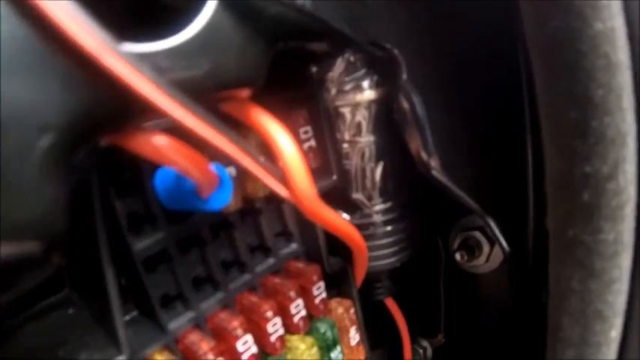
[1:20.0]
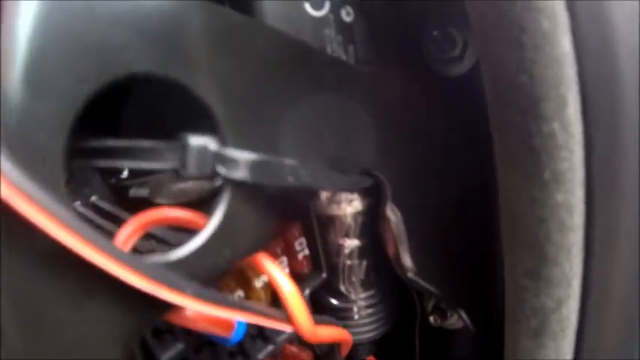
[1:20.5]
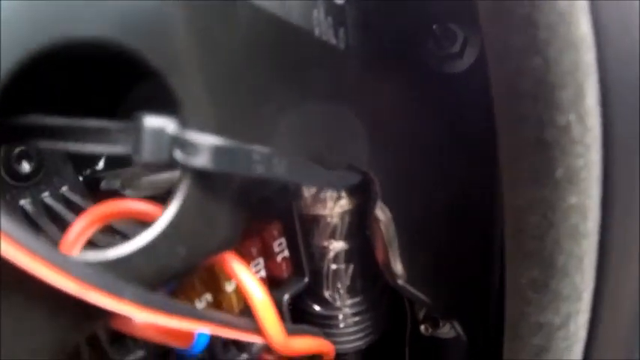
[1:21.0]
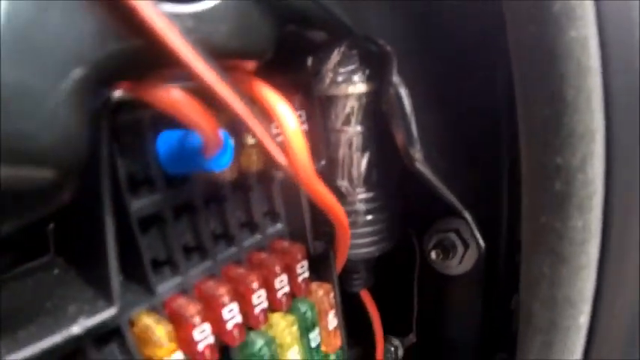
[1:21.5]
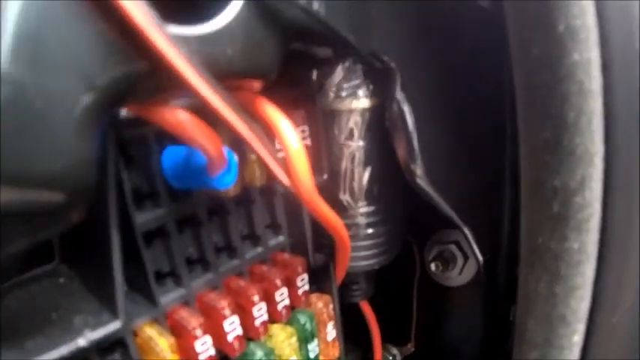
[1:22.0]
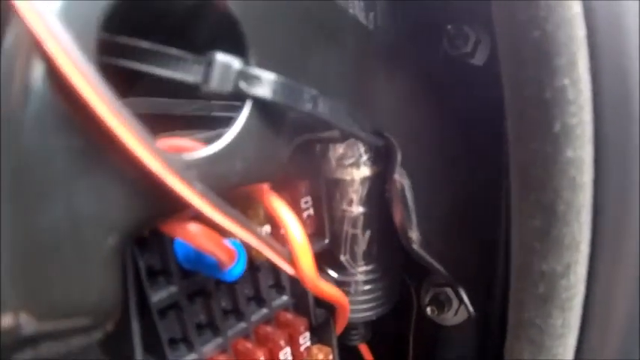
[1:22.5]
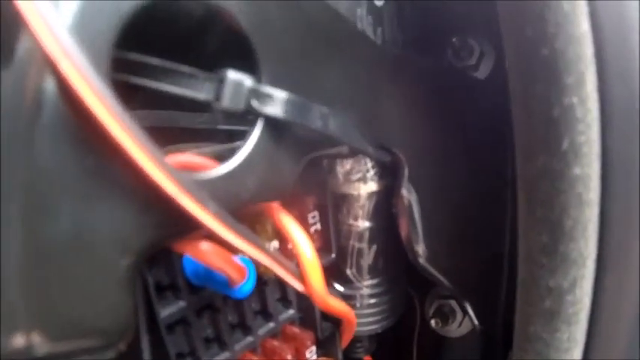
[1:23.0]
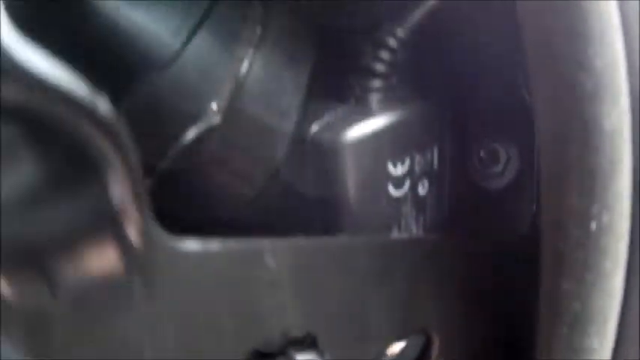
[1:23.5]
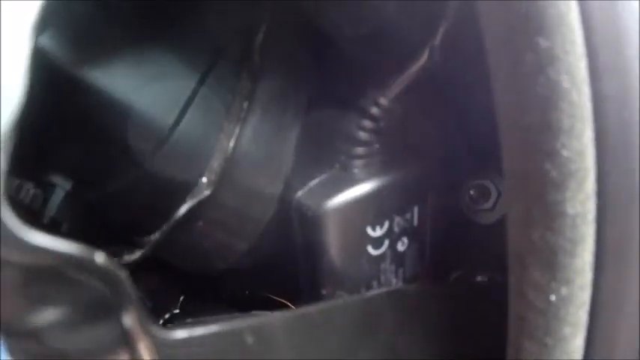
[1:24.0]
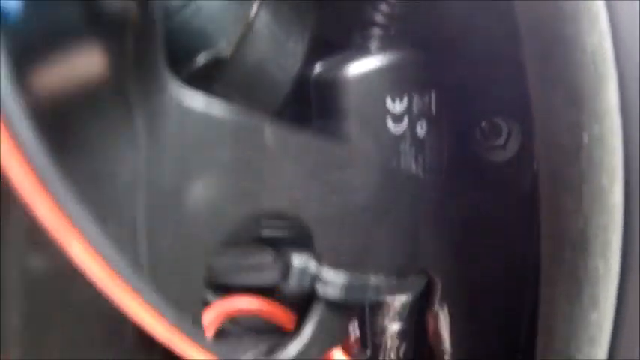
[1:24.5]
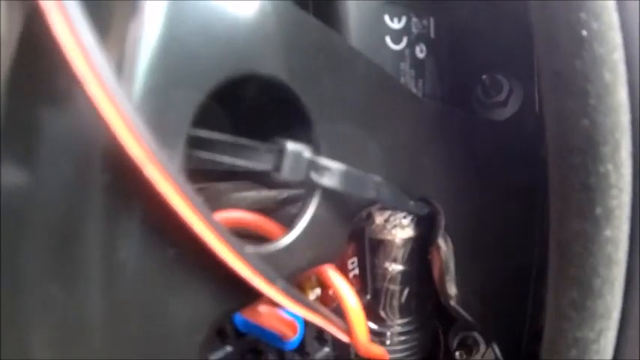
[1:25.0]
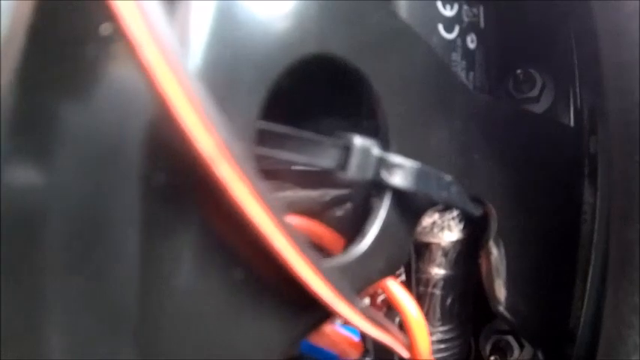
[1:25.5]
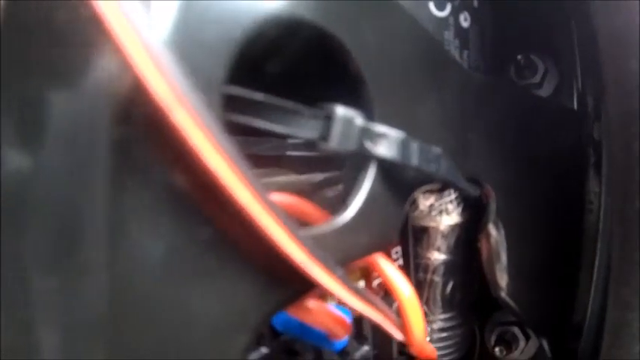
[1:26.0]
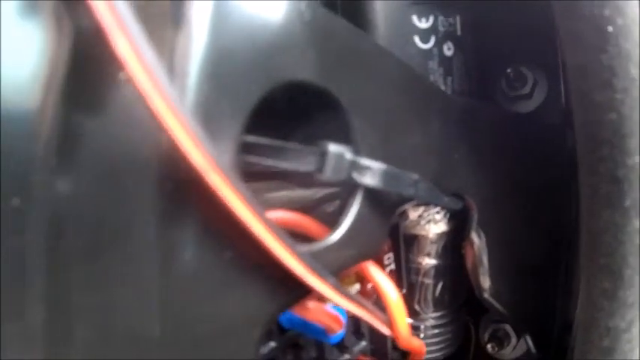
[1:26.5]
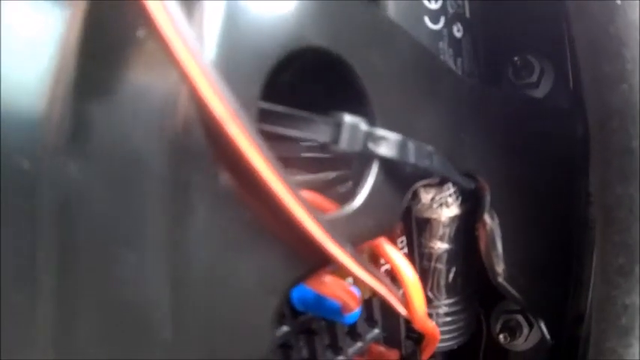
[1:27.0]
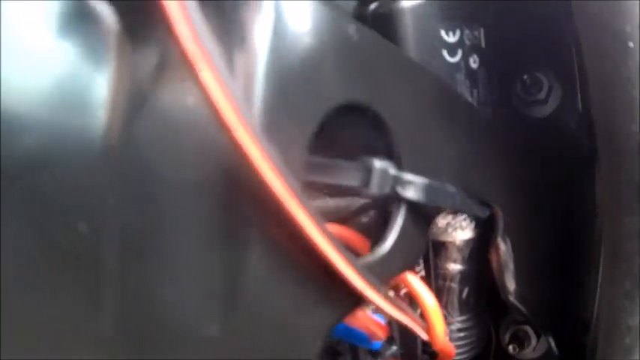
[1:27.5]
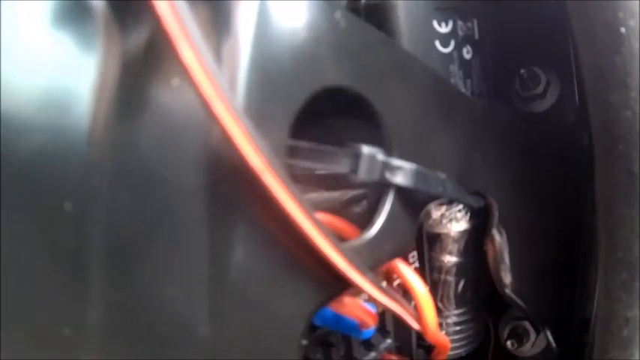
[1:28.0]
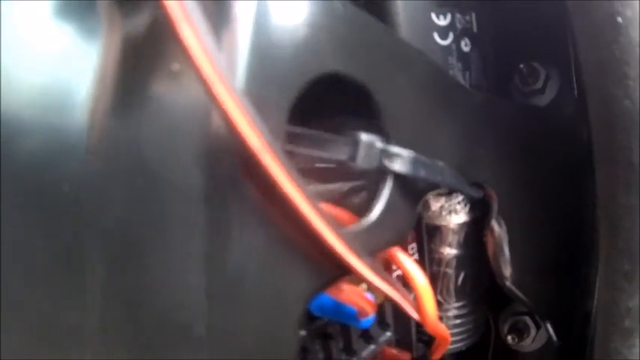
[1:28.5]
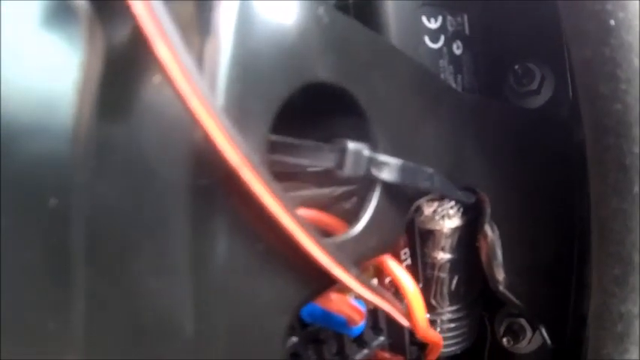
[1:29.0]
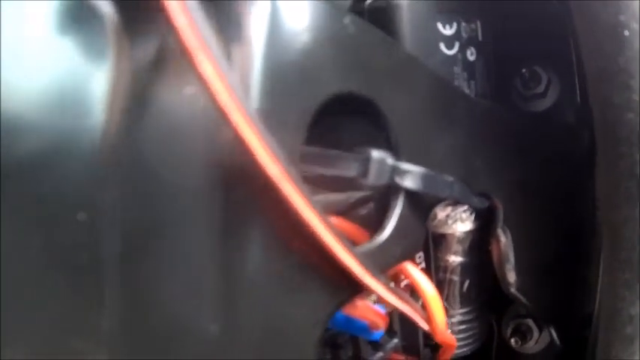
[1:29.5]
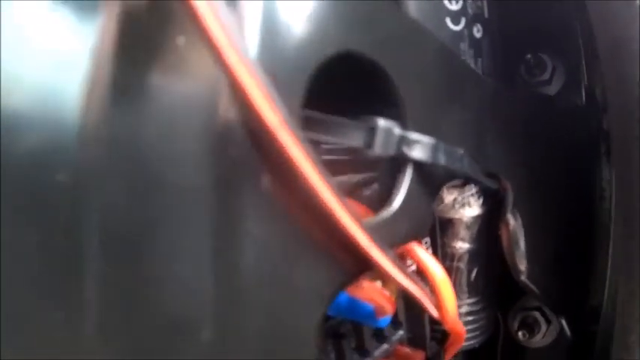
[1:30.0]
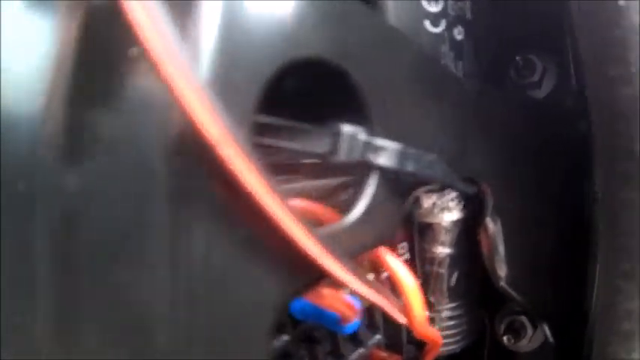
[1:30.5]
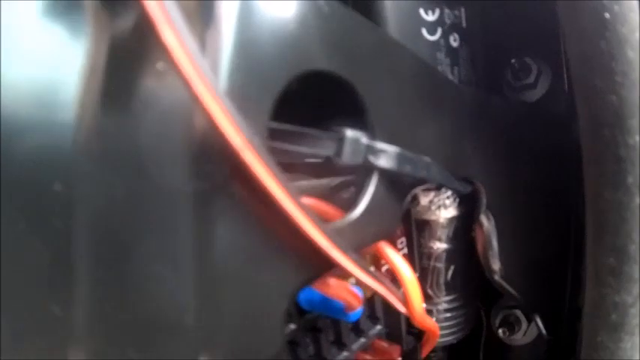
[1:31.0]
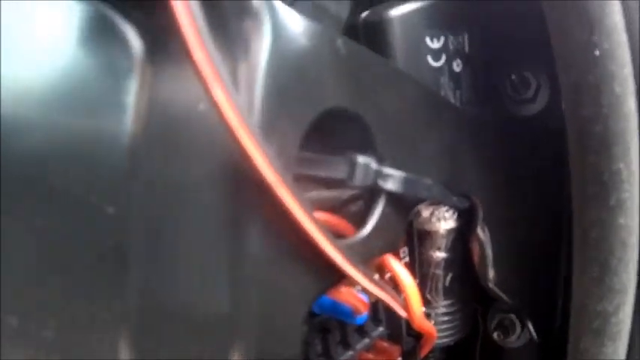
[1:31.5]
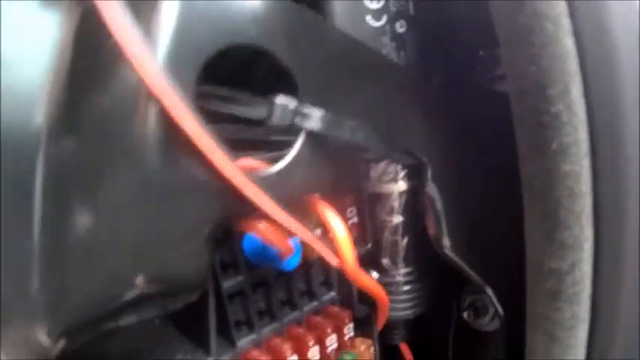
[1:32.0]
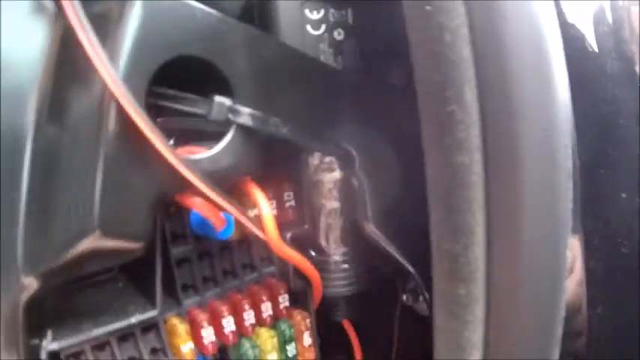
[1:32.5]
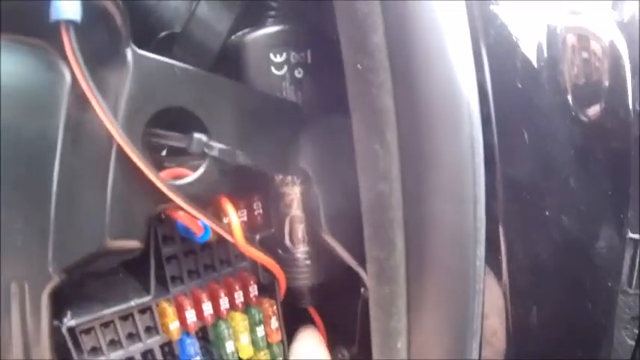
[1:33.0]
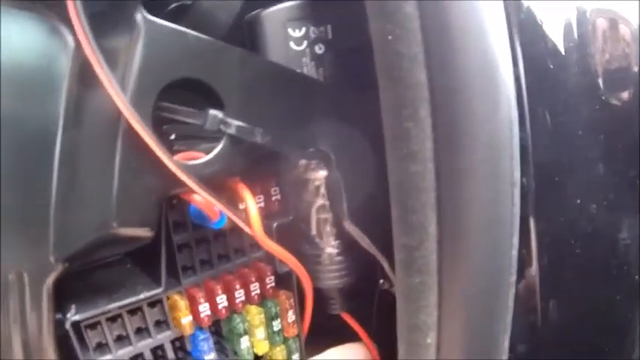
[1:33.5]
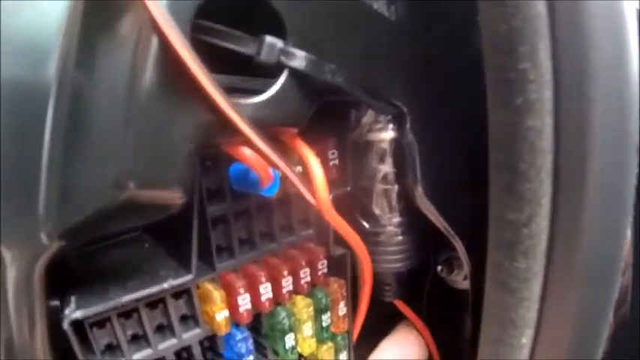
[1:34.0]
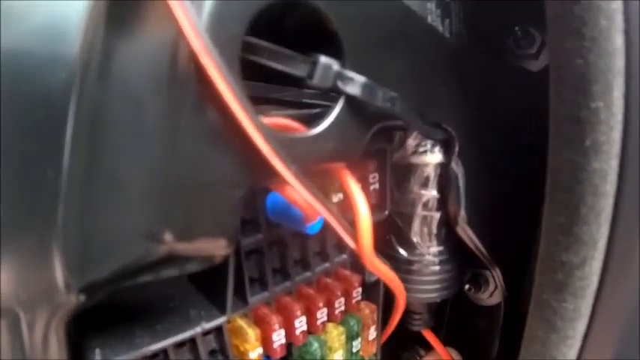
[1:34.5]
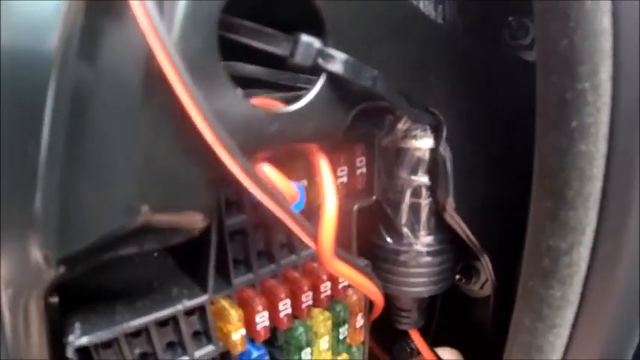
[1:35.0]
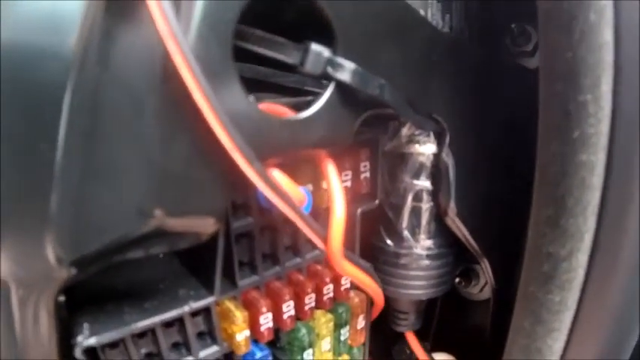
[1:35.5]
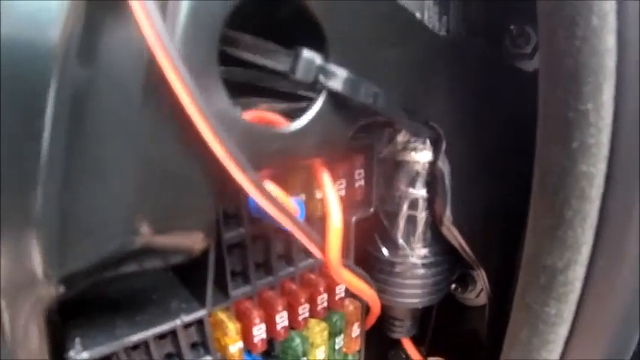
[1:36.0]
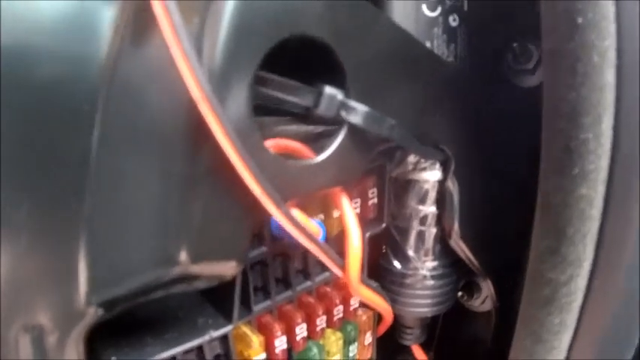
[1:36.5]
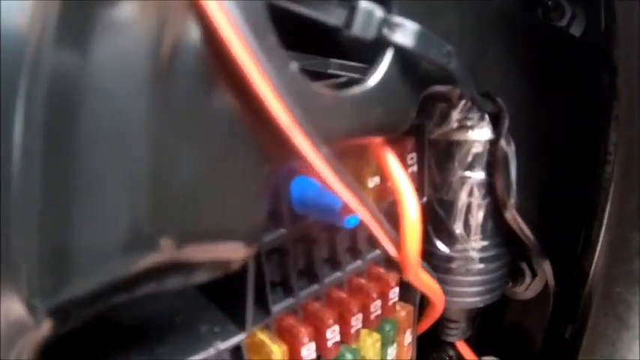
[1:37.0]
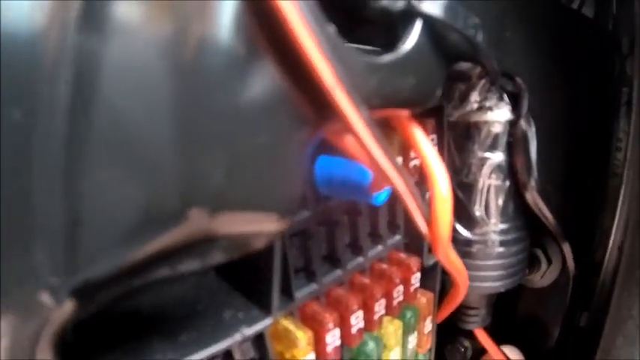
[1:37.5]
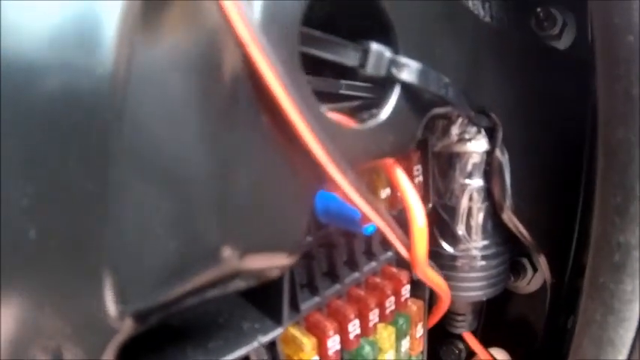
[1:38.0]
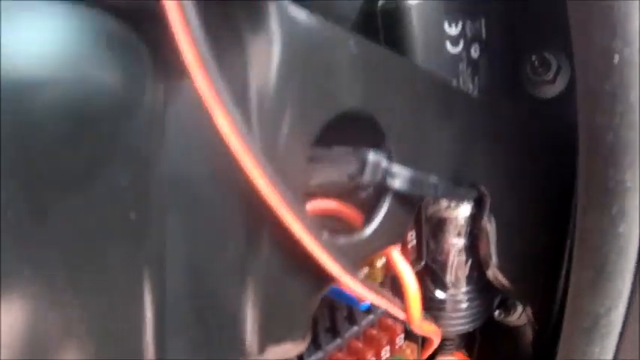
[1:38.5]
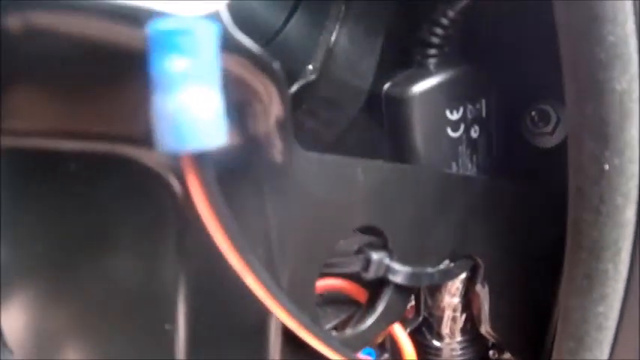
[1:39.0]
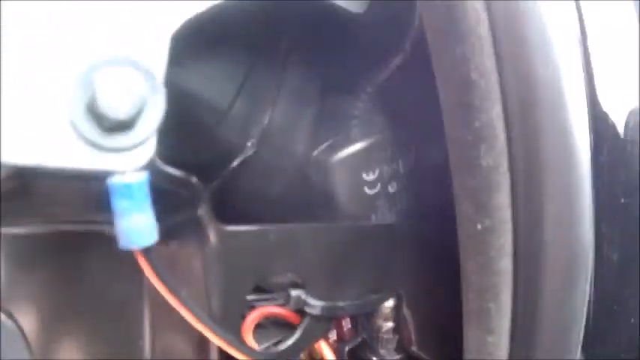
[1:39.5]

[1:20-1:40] What may be a car's fuse box is shown, with a couple of red wires running out of it and several rows of fuses. The top row has only three fuses and a little blue plastic piece with a wire coming out of it. The next row is empty. The third row shows five red fuses and one orange one; the orange one is number 5 and the others have the number 10 on them. The camera pans up a little to the steering wheel, what may be the blinker handle, and the air vent. Through the front windshield the sky looks white to very dark gray, as if it is a completely cloudy day. The camera pans back down to the fuse box for a good look at the fuses and wires, shaking a little. Right before the end, his hand appears to reach toward one of the wires.